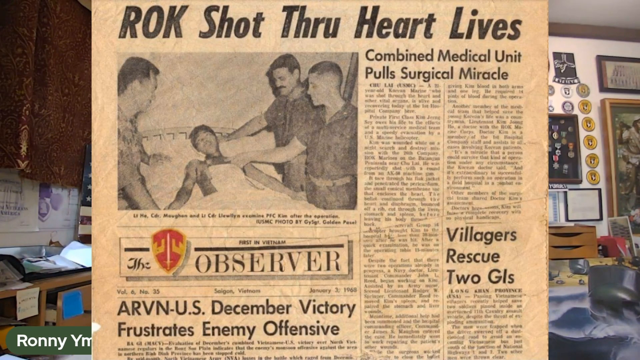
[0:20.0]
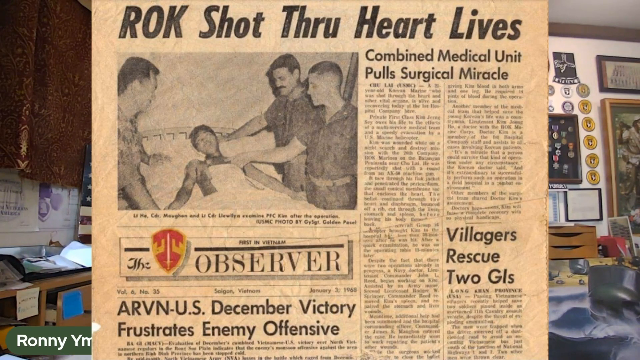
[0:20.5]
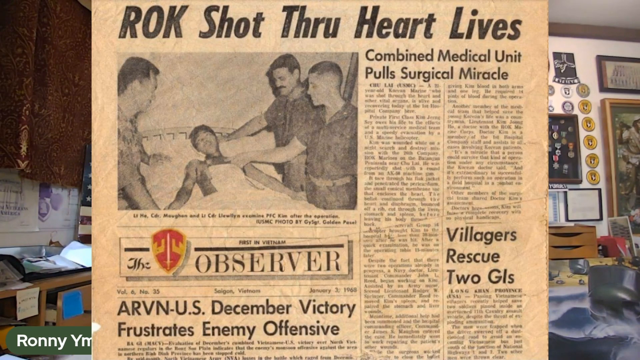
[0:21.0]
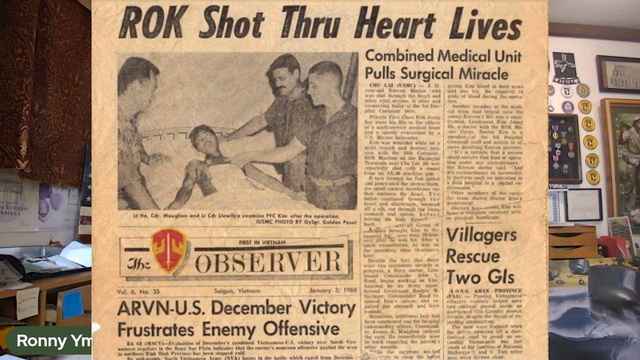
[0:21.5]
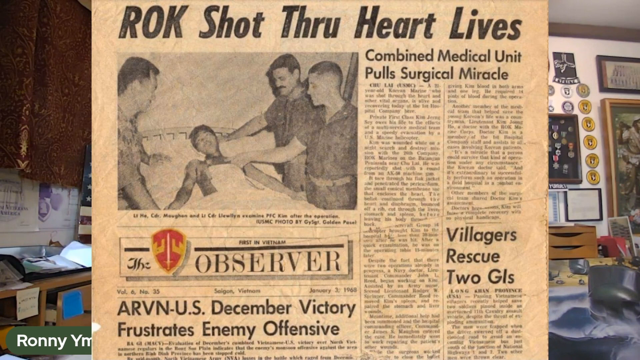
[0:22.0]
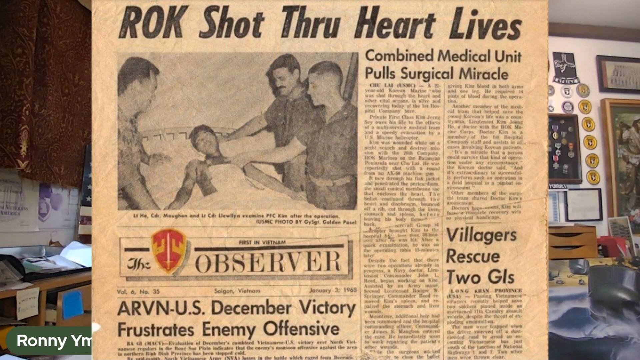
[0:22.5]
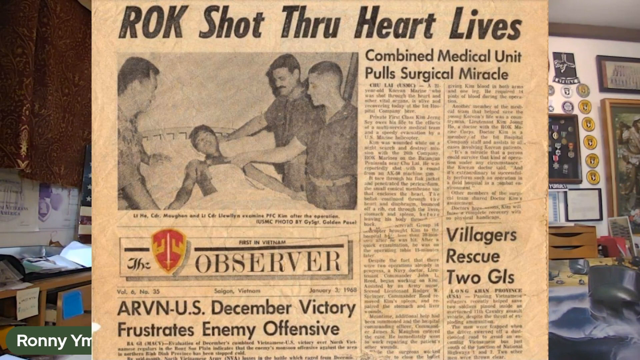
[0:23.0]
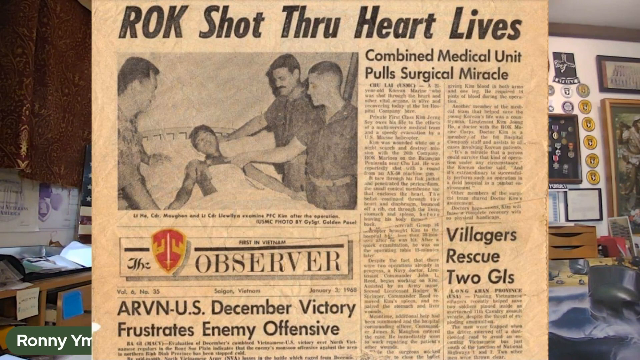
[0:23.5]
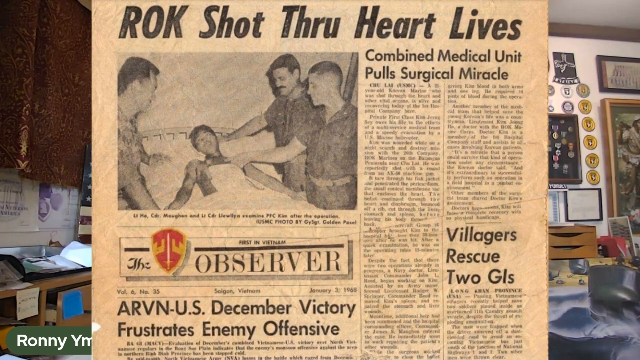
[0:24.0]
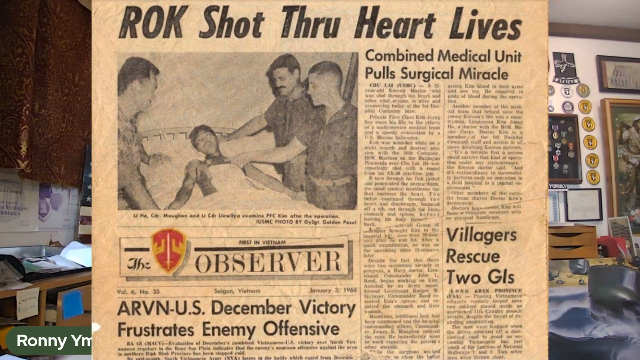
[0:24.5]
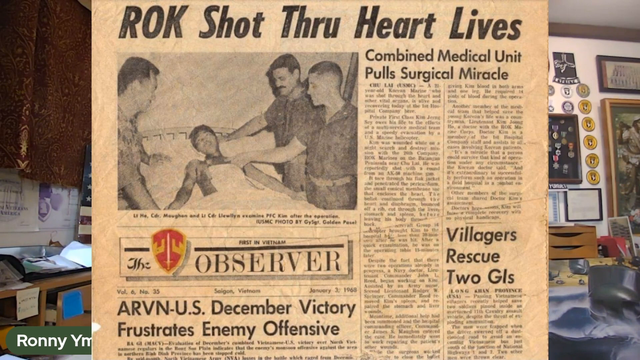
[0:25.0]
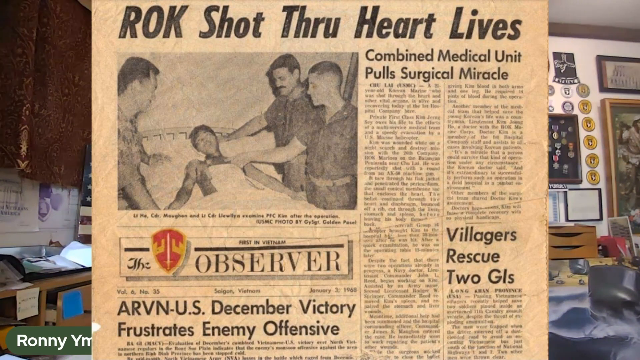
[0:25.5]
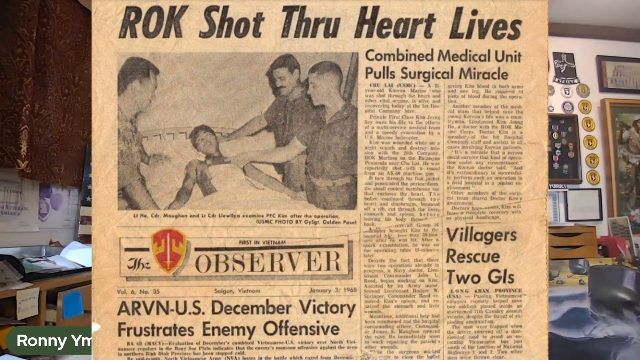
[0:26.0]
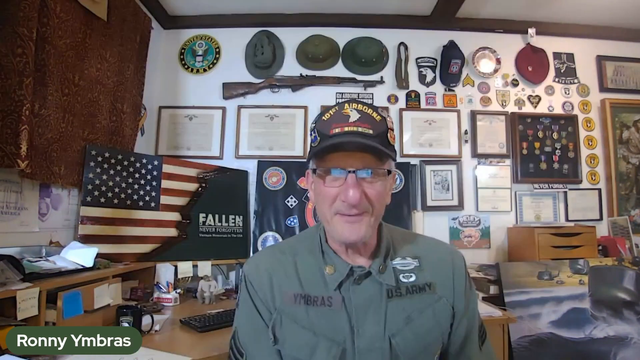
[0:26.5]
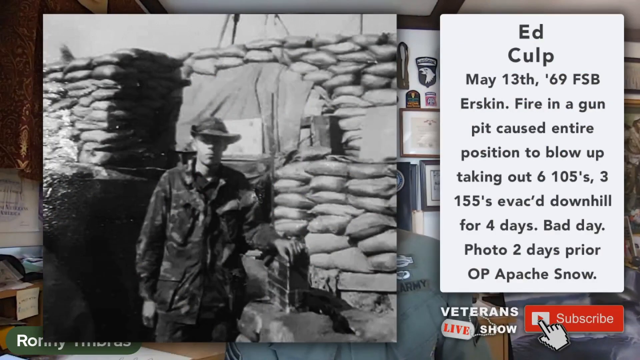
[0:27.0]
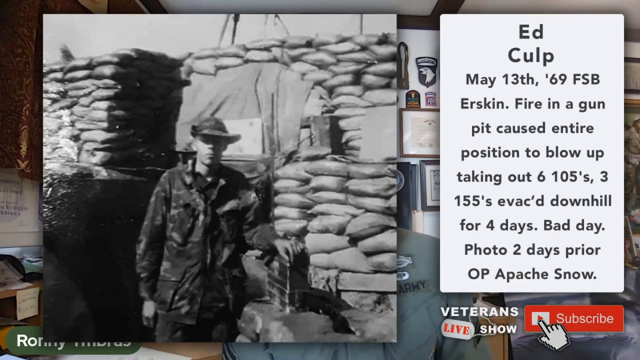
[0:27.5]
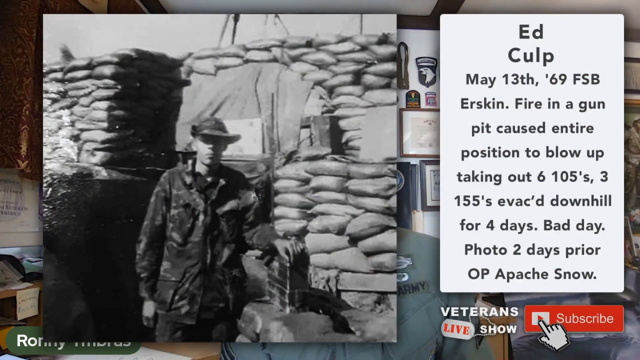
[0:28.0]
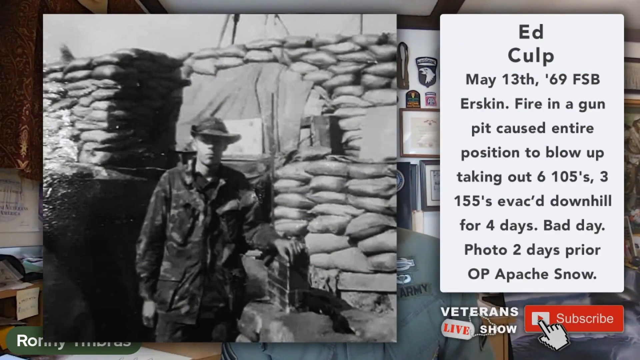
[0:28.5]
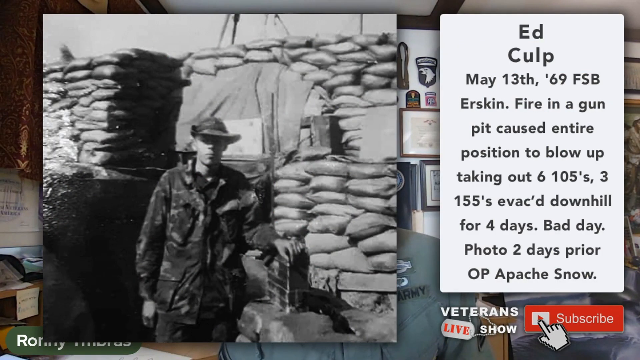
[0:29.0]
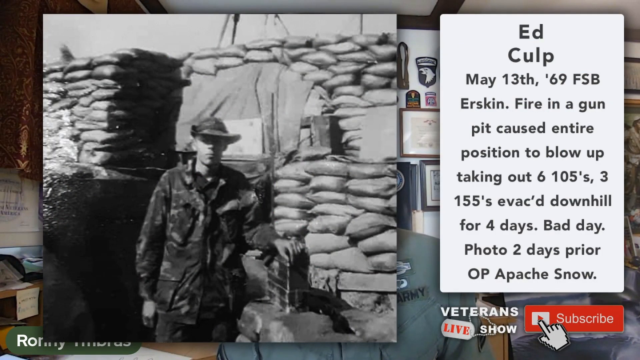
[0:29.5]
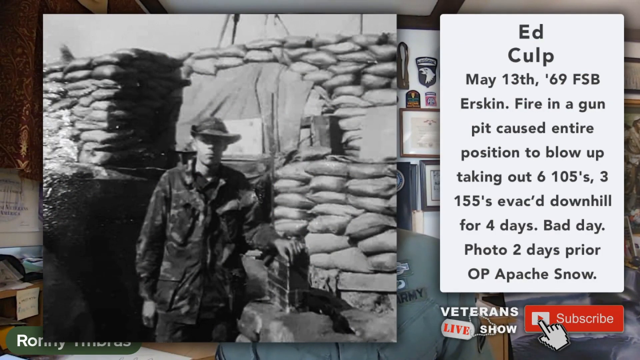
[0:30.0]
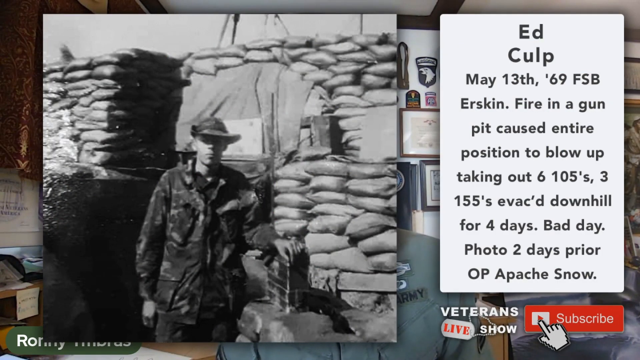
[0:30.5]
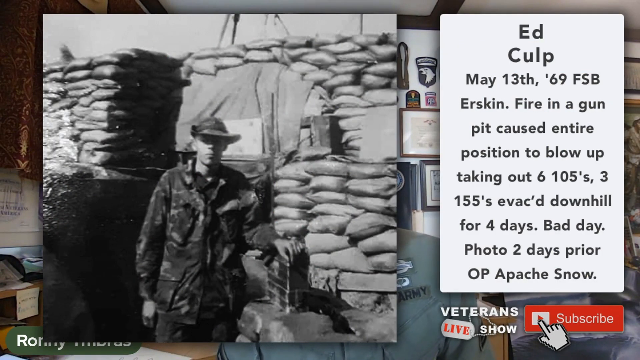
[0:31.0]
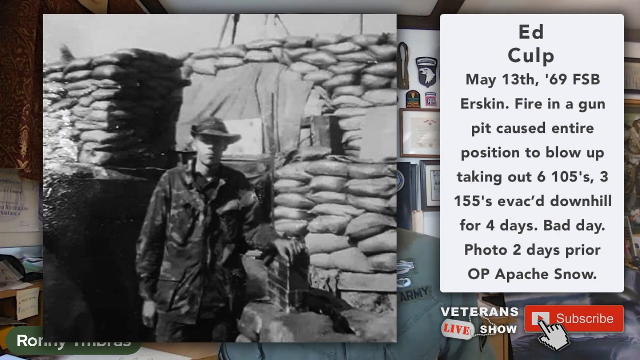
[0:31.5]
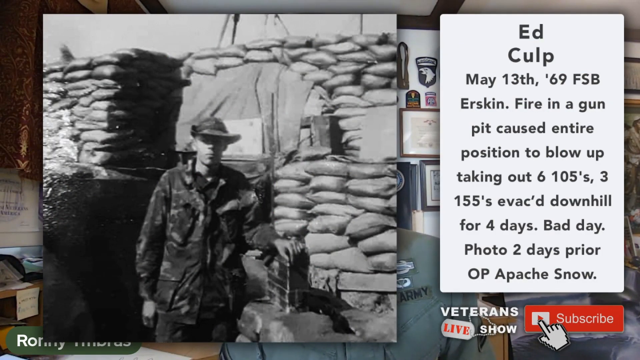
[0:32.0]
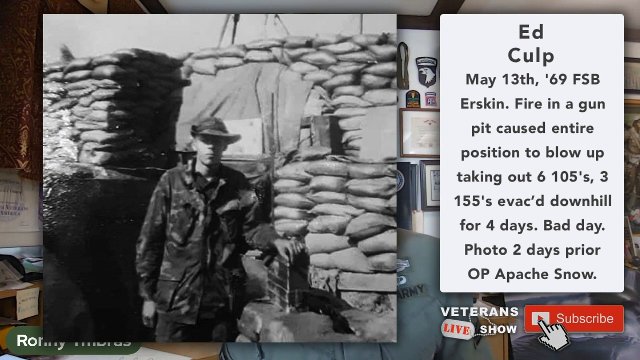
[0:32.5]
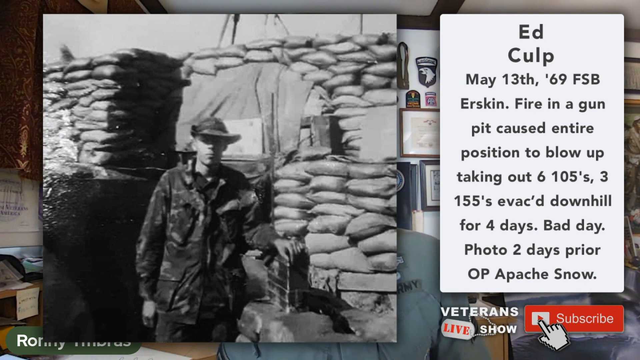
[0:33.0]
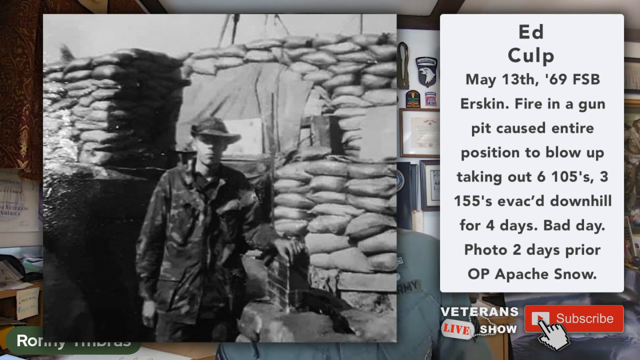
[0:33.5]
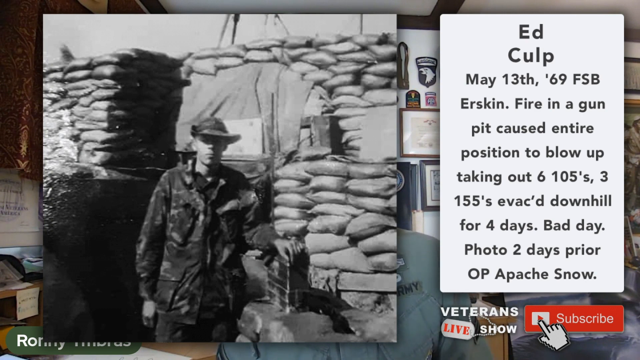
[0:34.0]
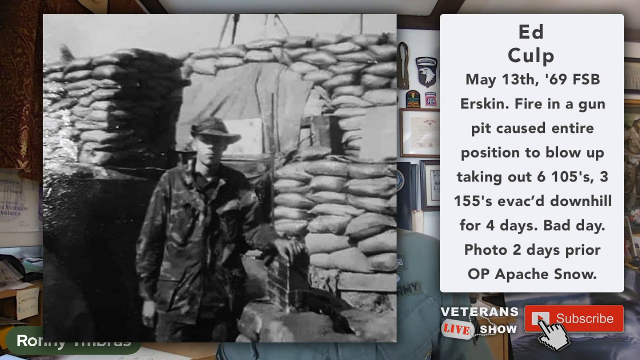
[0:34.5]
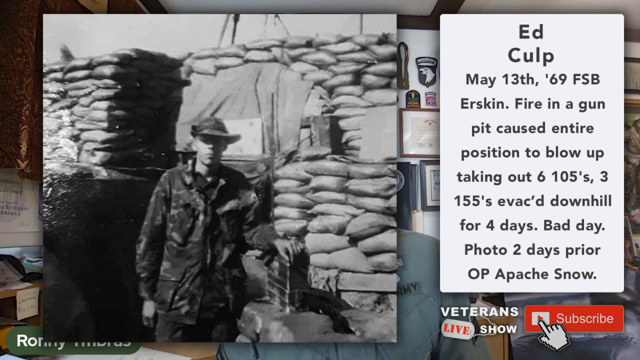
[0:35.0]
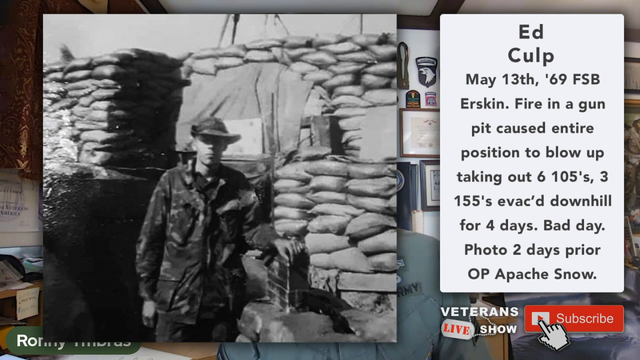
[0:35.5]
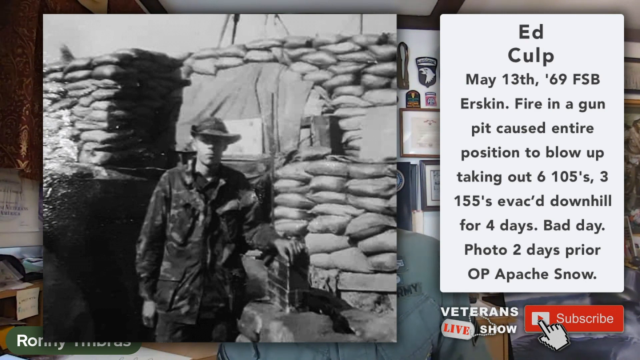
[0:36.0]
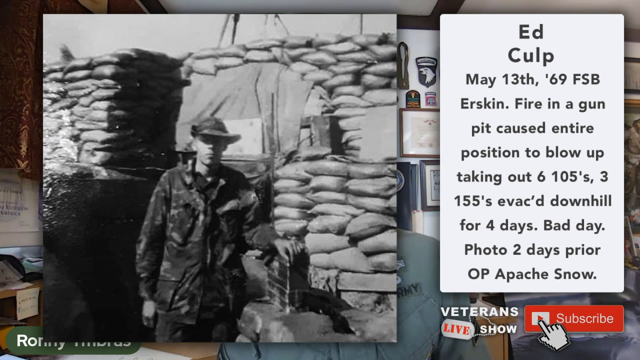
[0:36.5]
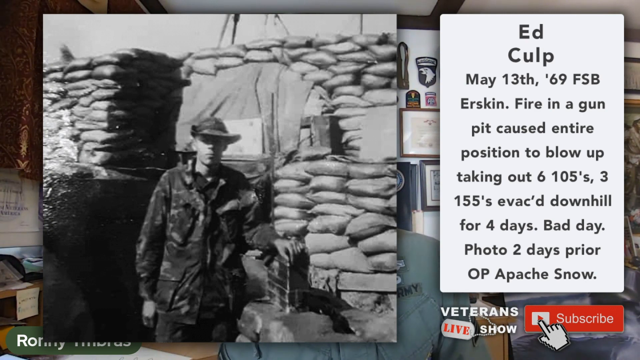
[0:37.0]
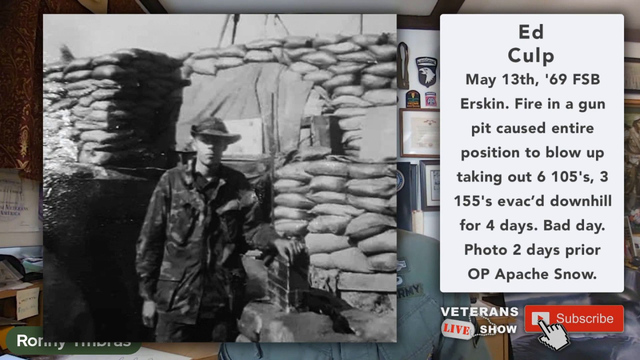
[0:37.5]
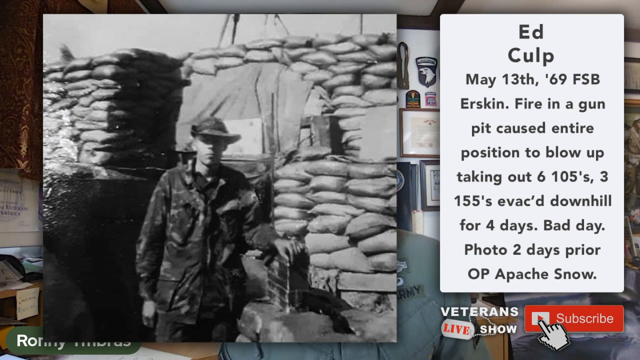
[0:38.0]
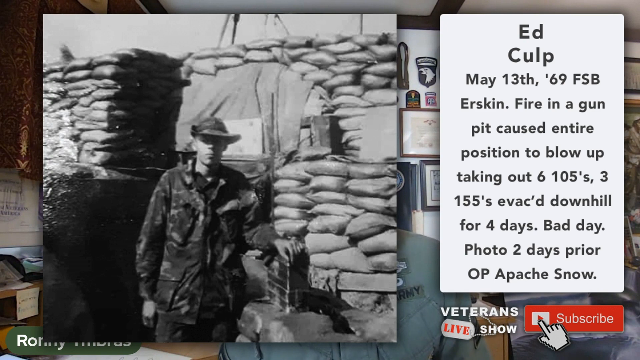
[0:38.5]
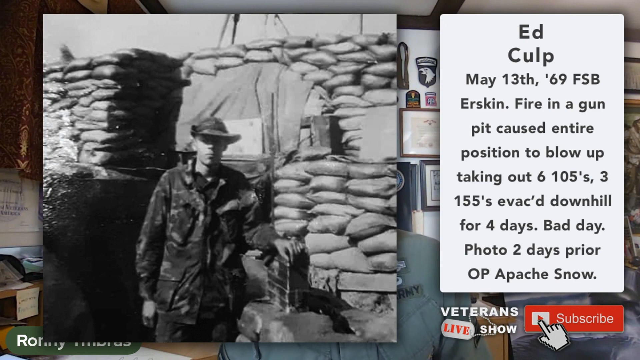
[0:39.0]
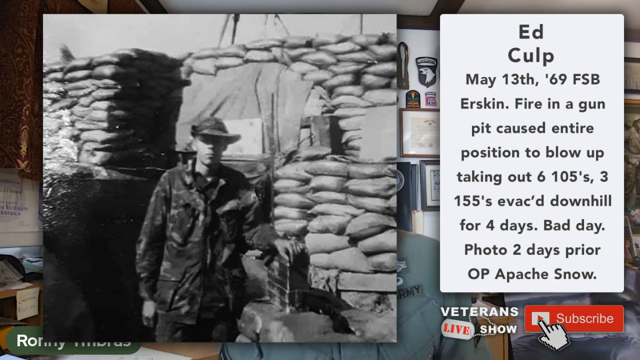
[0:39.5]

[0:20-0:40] The newspaper clipping is still shown, with the headline "ROK shot through heart lives," the story of a combined medical unit pulling a surgical miracle, and the date January 3rd, 1968. The older man appears for a split second, and then the video moves to a photo from Ed Culp dated May 13th, 1969. The accompanying text tells of a fire in a gun pit that caused the entire position to blow up, taking out six 105s and three 155s, with the men evacuated downhill for four days, and says it was a bad day. The photo is from two days prior, of the Apache snow. The man is visible in the background, talking.